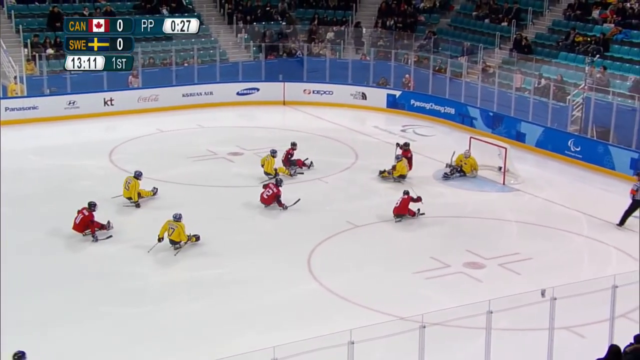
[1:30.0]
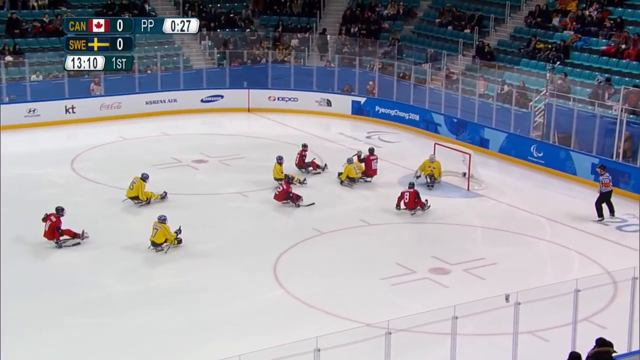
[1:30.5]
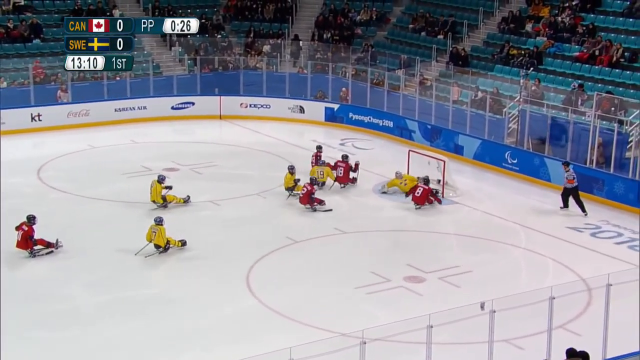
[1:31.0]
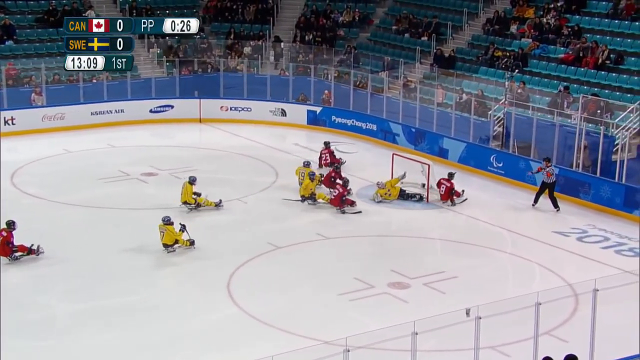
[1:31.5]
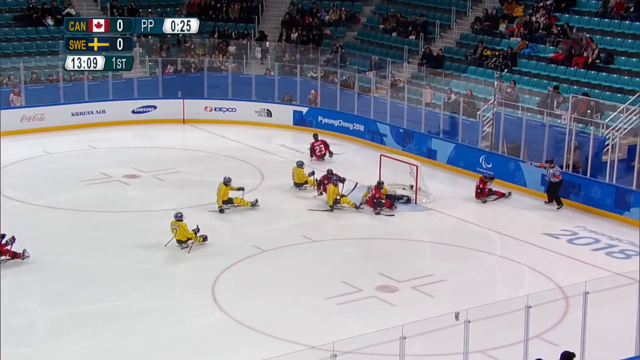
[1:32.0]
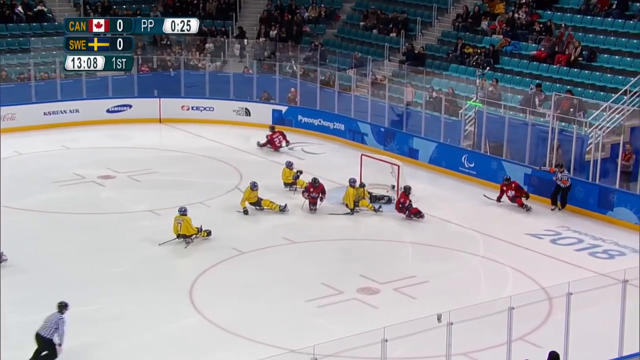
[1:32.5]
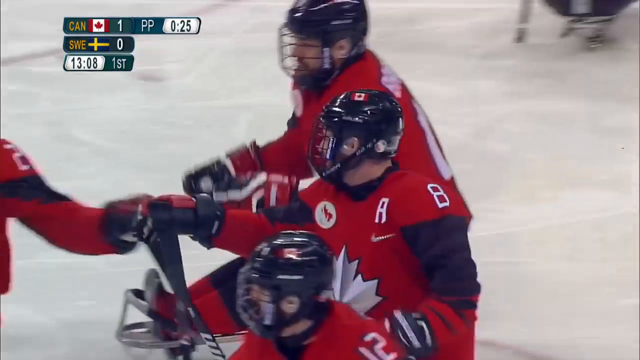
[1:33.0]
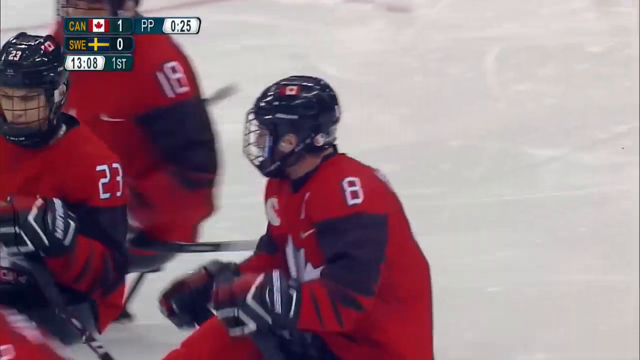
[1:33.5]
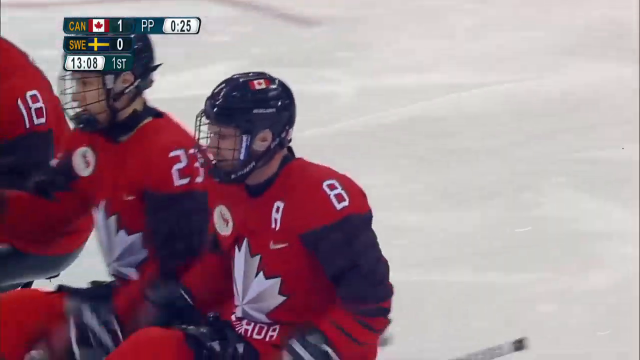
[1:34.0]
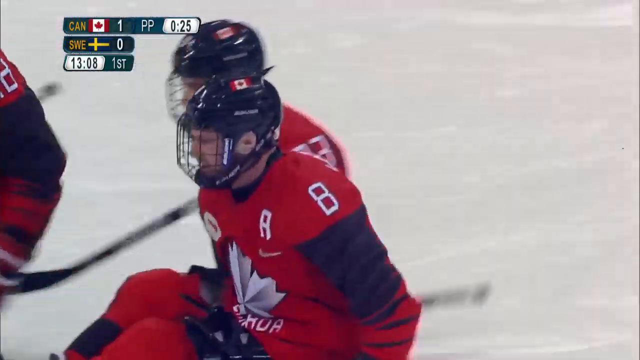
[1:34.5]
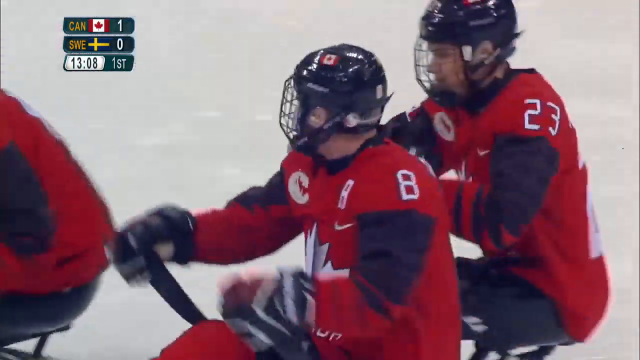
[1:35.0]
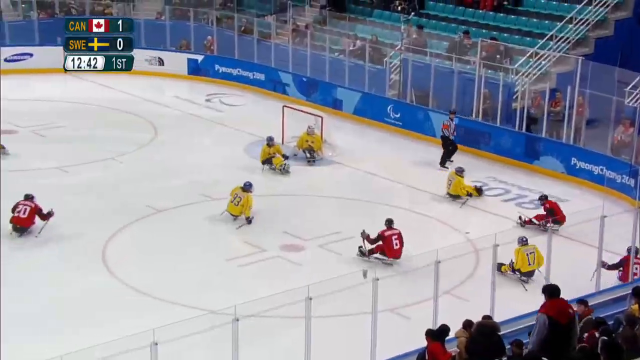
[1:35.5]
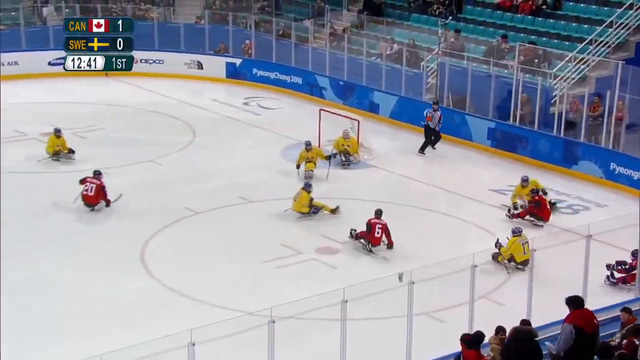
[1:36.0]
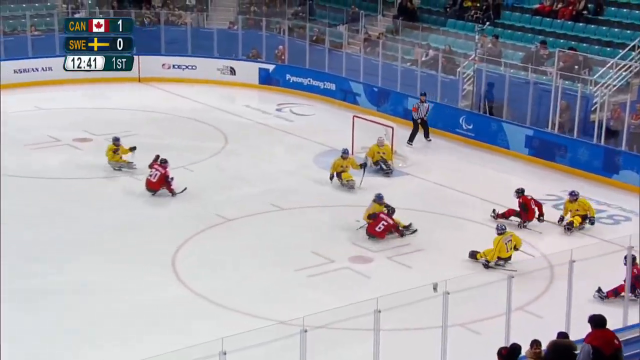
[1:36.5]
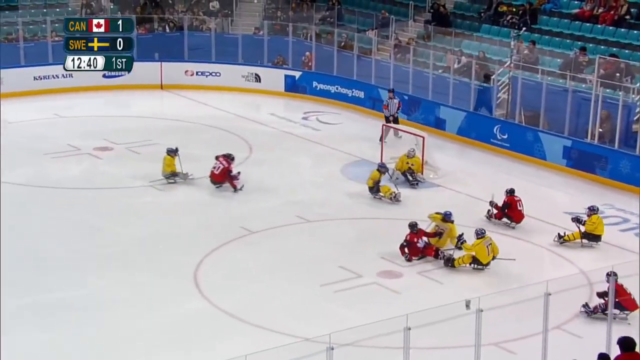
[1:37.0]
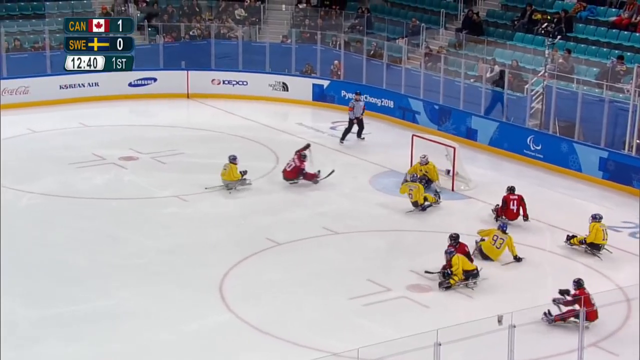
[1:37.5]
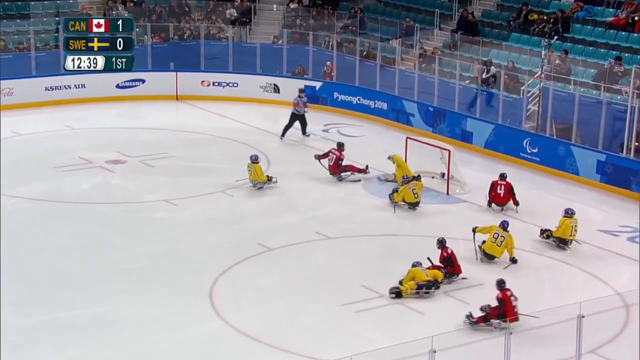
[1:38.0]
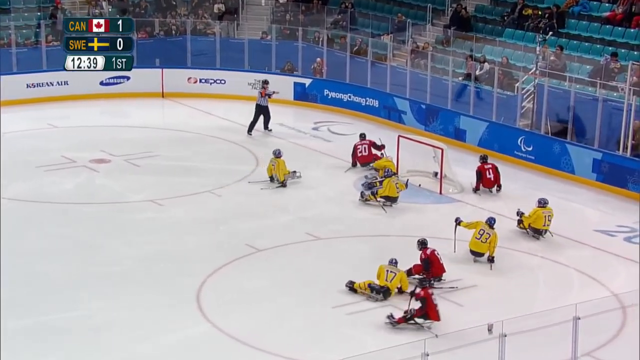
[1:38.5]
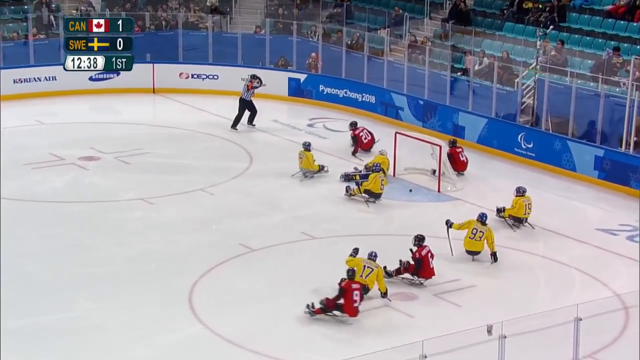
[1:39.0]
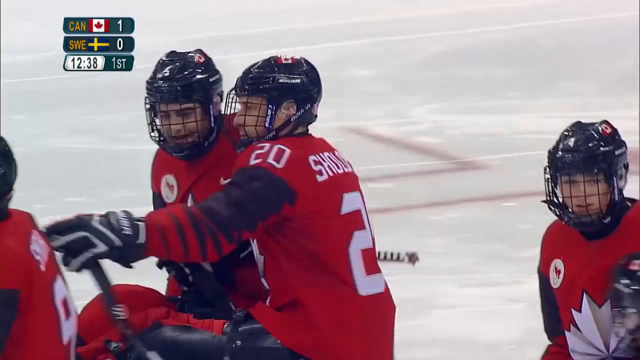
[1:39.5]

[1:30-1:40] The teams go out onto the hockey rink on a kind of sitting apparatus that is hard to see. "Pyeongchang 2018" is in the background, and a score display shows Canada and Sweden, the period, and a score of 0-0. People are visible in the audience. Sweden wears yellow with some blue, and Canada wears red. The teams skate around, and Canada scores into the Swedish team's net past the goalie. The players skate on, and the Canada team high-fives each other, happy about the goal.